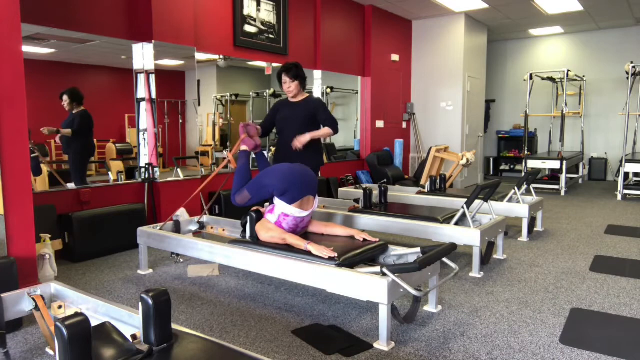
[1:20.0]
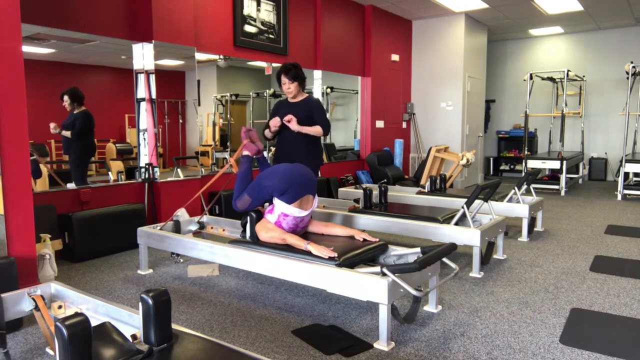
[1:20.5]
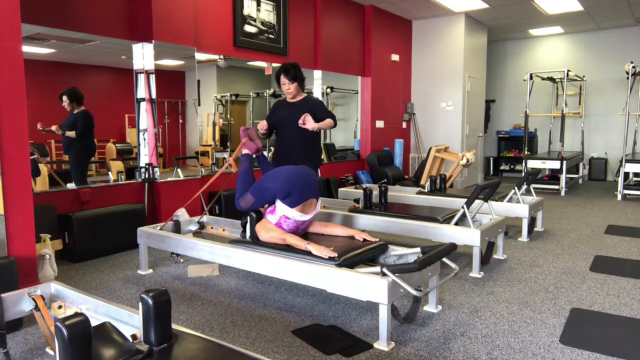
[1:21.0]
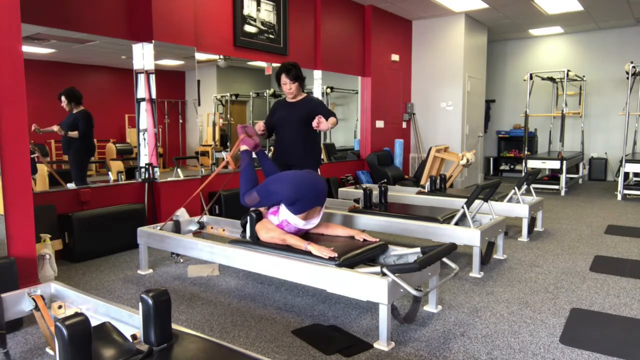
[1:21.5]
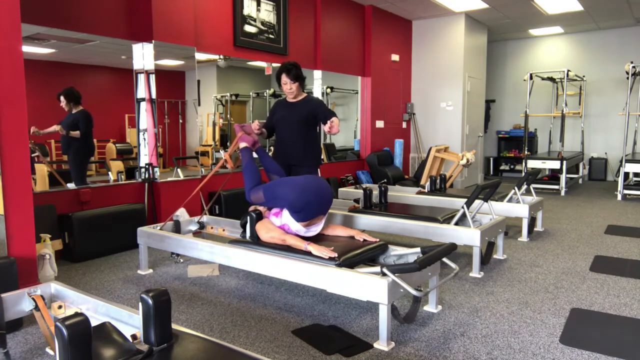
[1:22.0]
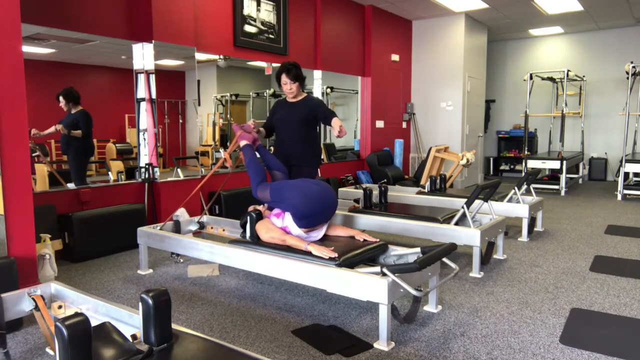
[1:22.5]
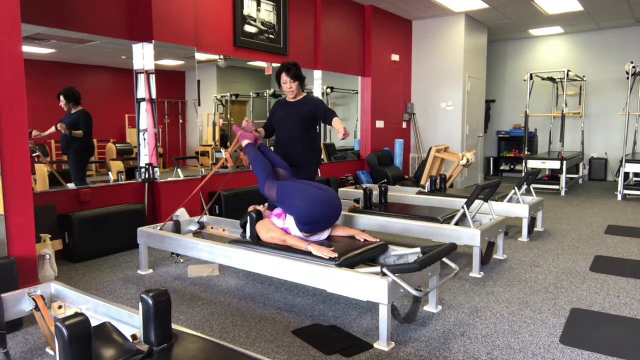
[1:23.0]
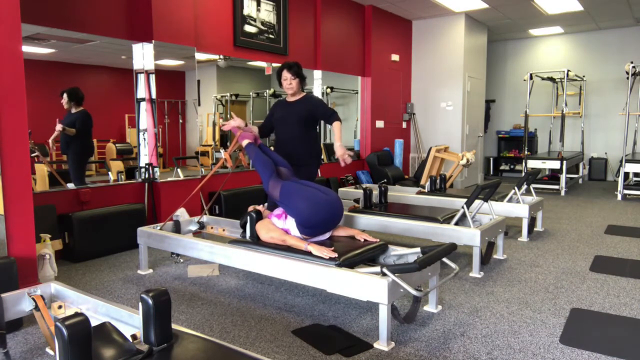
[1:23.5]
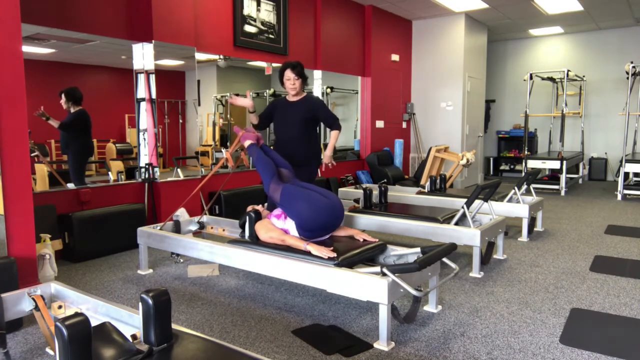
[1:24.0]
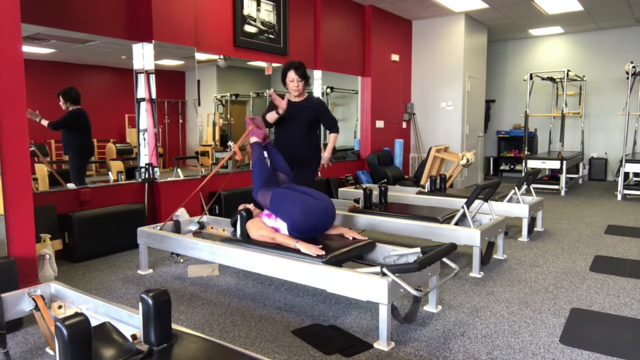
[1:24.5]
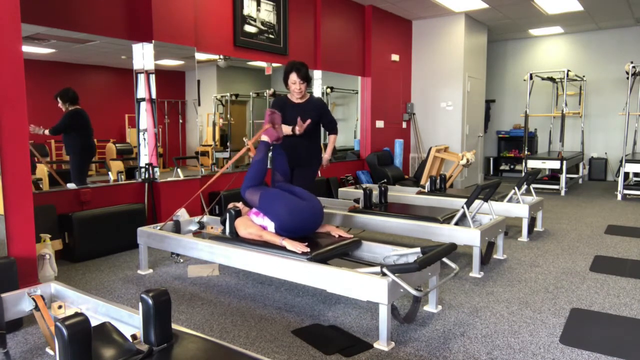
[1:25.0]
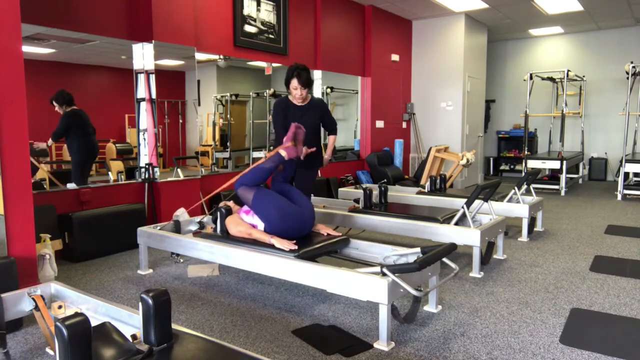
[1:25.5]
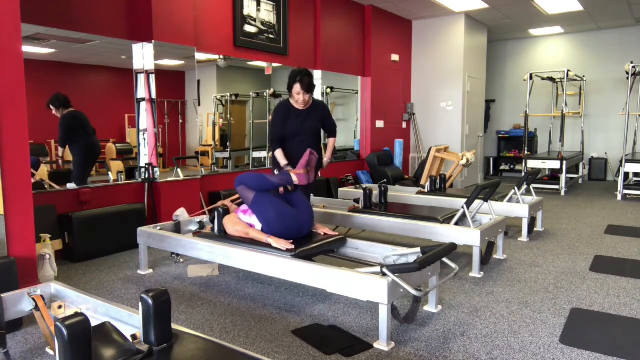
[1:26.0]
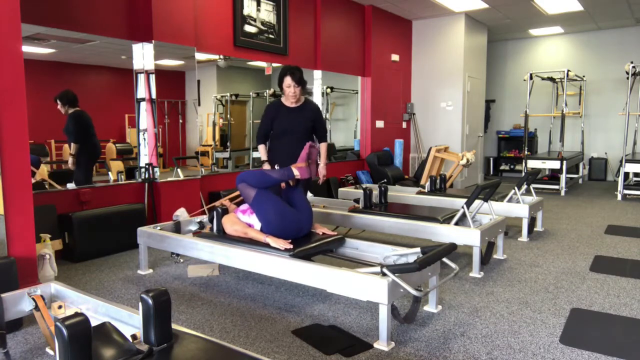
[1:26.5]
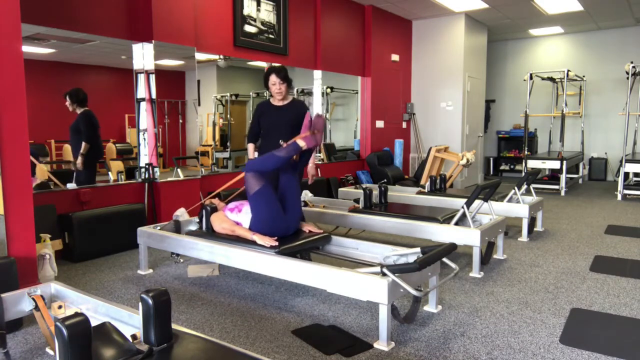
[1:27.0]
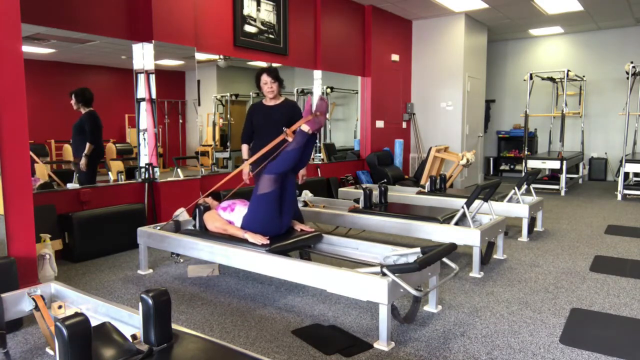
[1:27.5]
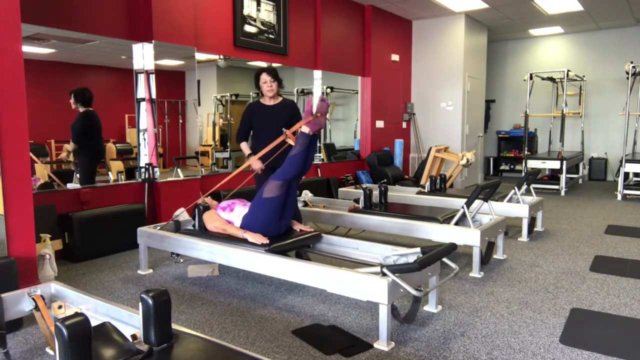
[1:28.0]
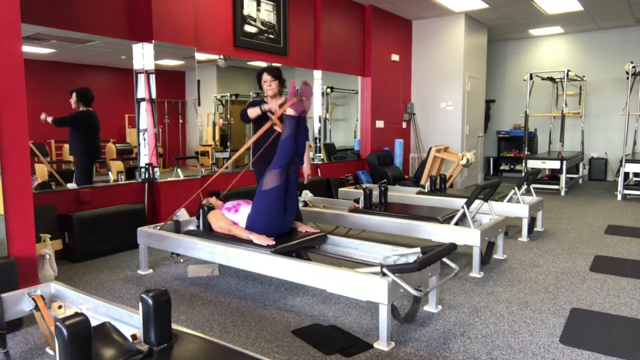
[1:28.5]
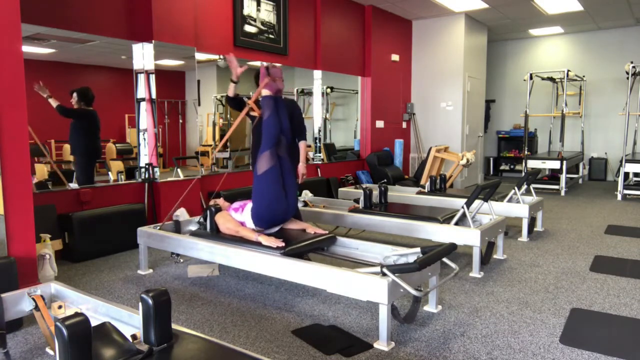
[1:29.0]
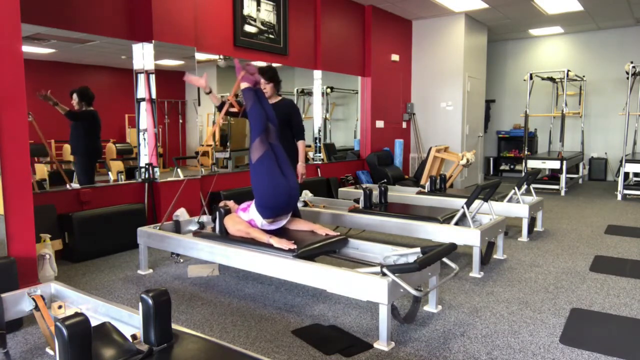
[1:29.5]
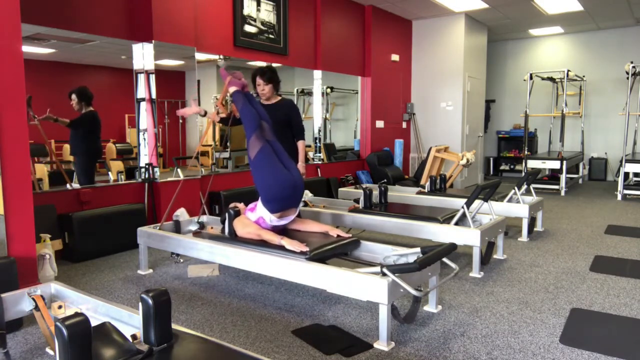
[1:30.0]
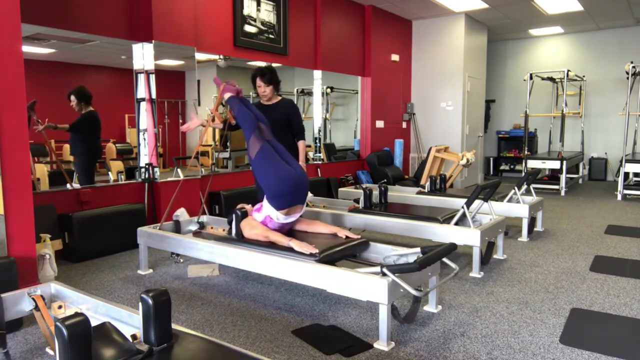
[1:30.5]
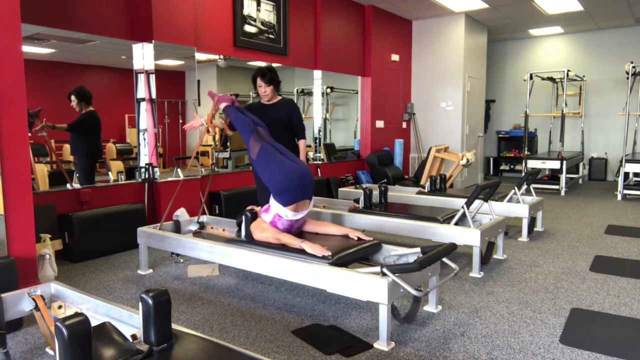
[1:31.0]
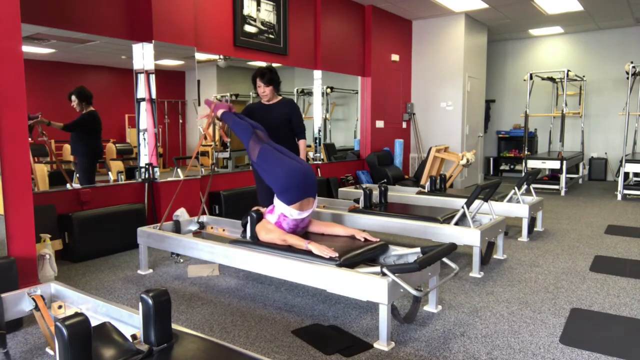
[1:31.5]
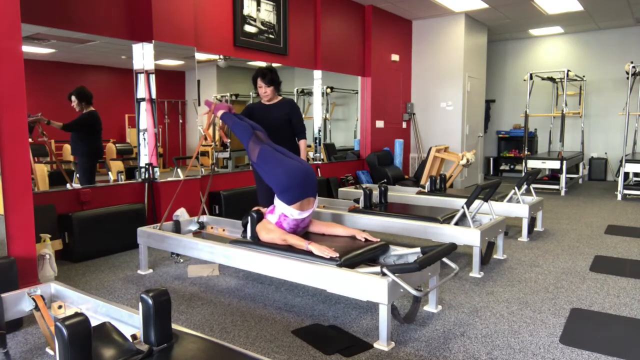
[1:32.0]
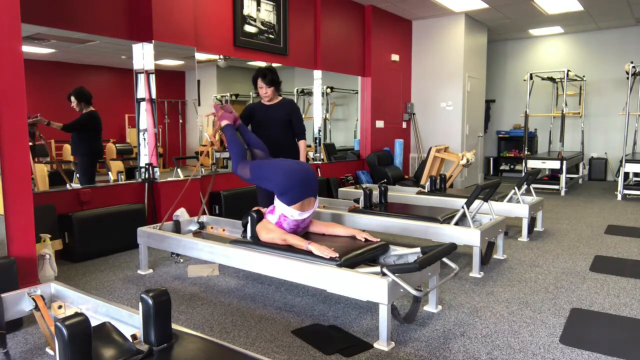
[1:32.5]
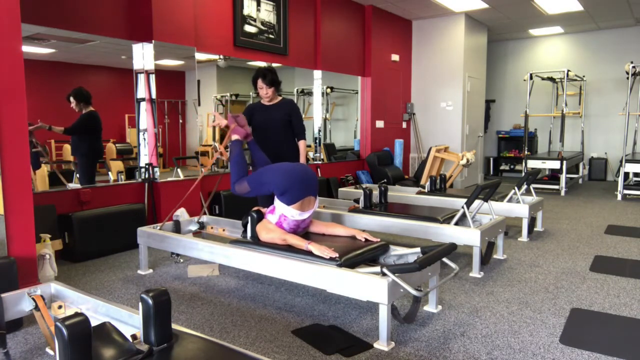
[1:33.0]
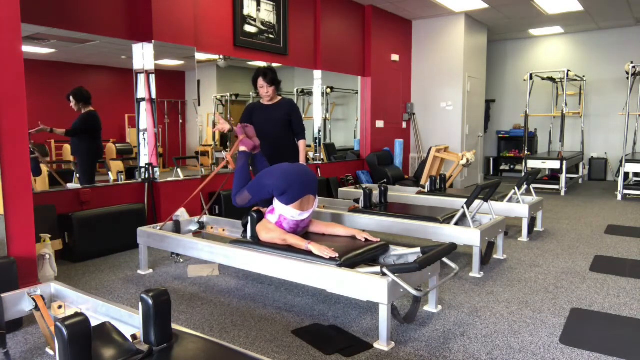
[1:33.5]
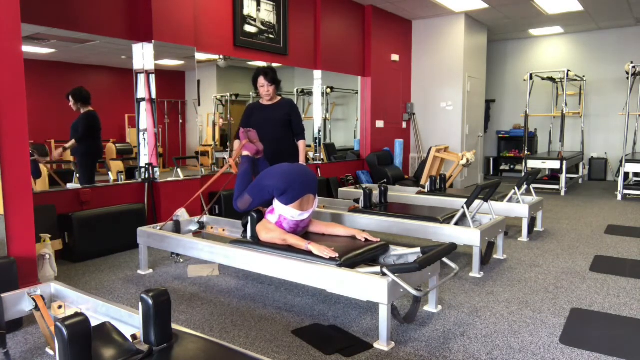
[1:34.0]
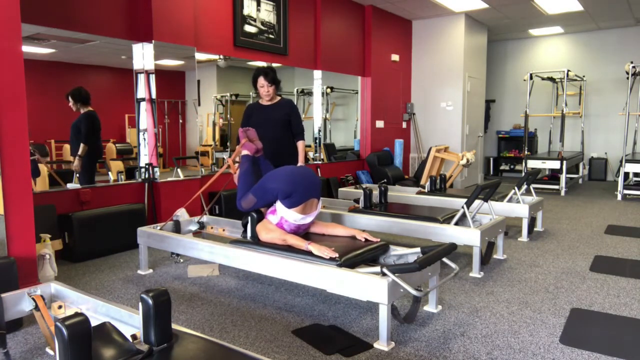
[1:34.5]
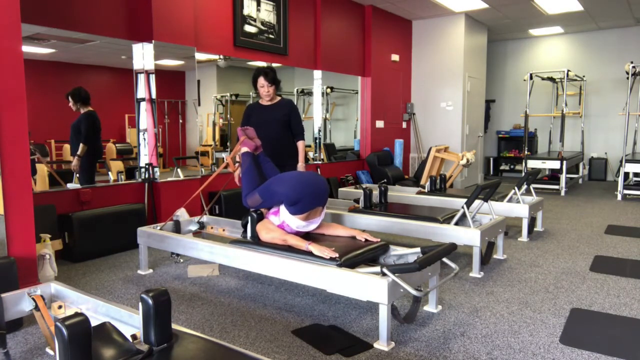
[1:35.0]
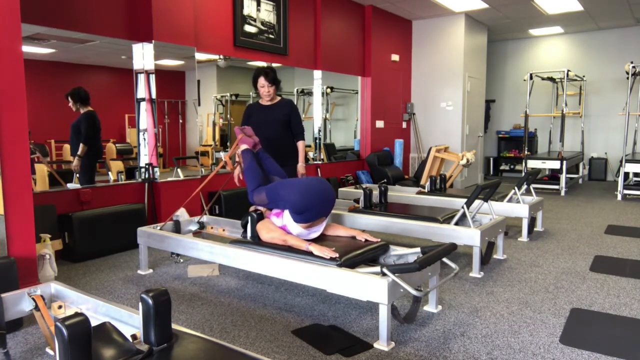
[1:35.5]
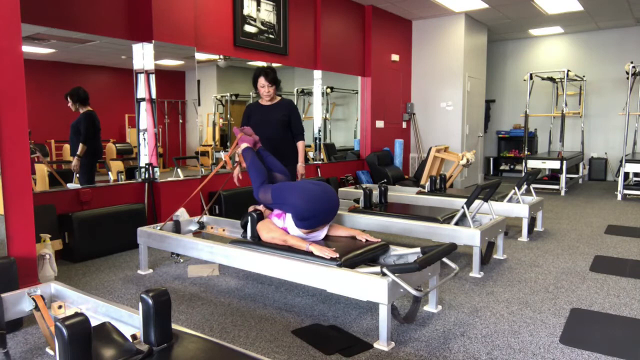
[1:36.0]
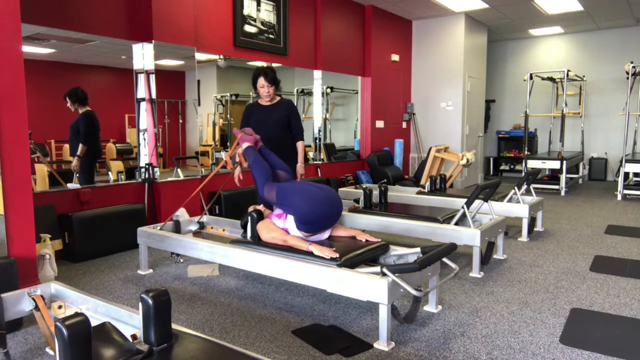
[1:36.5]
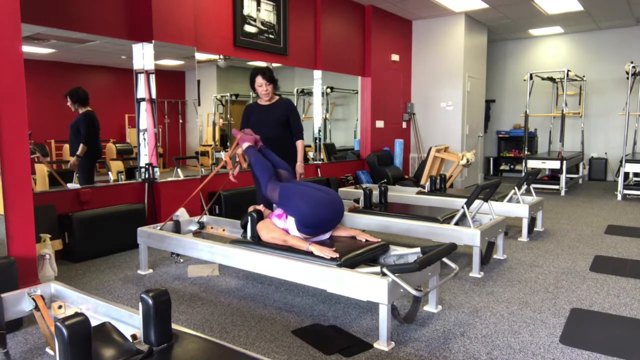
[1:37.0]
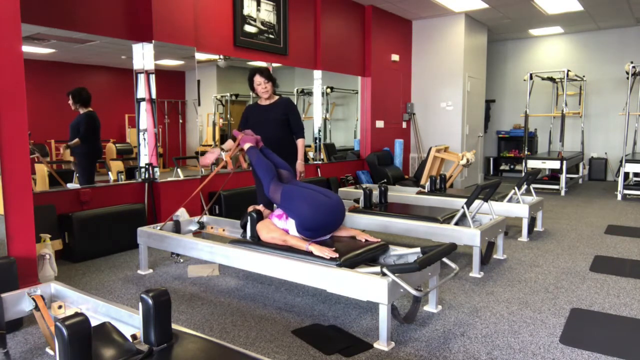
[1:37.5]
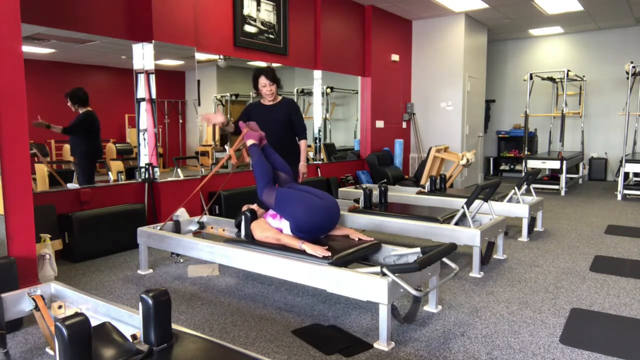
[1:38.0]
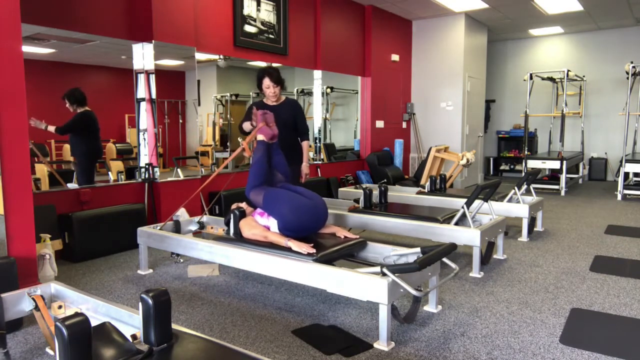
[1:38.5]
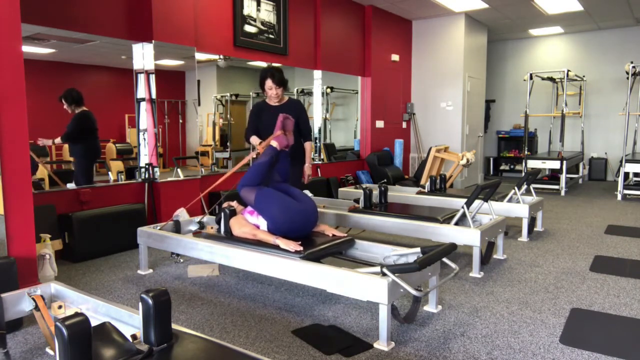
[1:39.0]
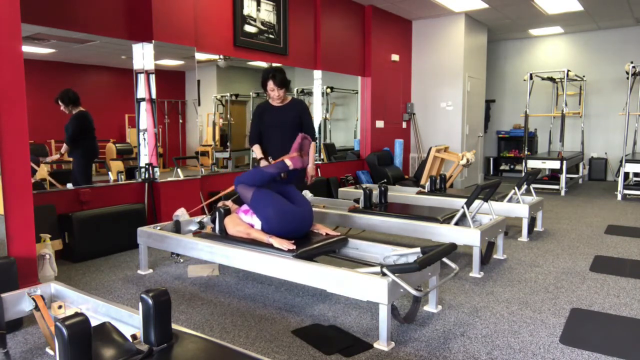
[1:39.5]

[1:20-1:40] In the Pilates studio, with reformer machines lined up in front of a red mirrored wall, a woman is on a reformer in the foreground while a woman standing next to her behind the reformer helps her perform the exercises correctly. The woman has her feet in the loops of the bands, her buttocks and lower back lifted off the carriage while her arms stay flat against it, and her knees bent close to her face. She lowers her buttocks onto the carriage, then pushes back and stretches her legs up and out straight ahead of her. The woman behind her moves her arm to indicate what to do as the woman lifts her buttocks off the carriage again and pushes her stretched legs up and over her head. She then bends her knees, brings them close to her face, and lowers her lower back against the carriage again to complete the stretching movement.